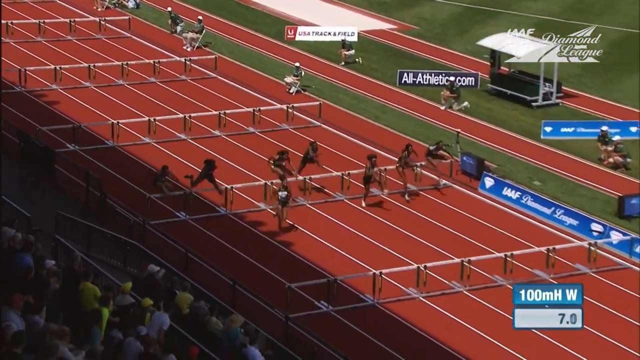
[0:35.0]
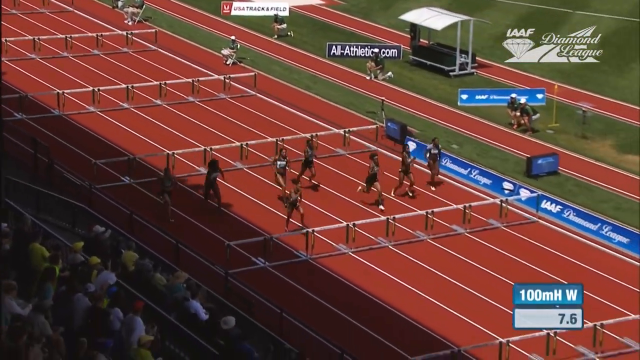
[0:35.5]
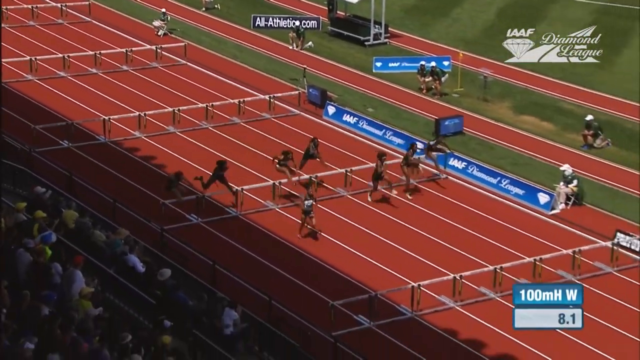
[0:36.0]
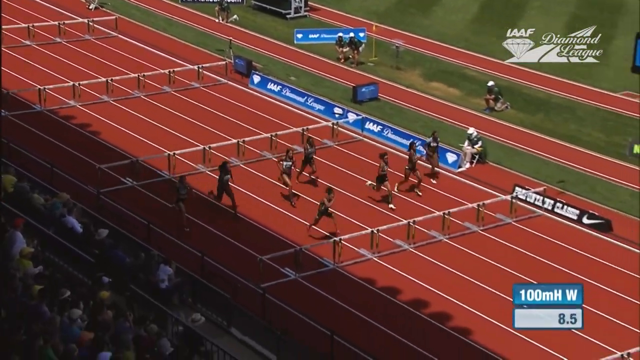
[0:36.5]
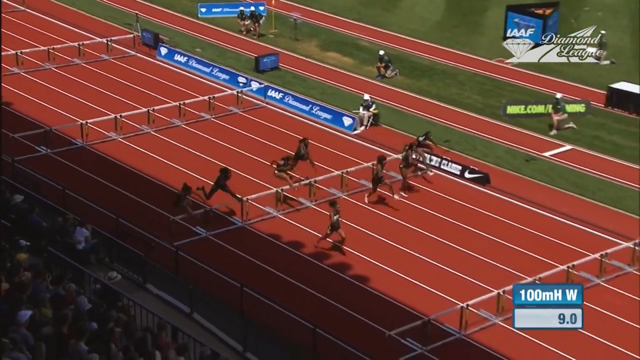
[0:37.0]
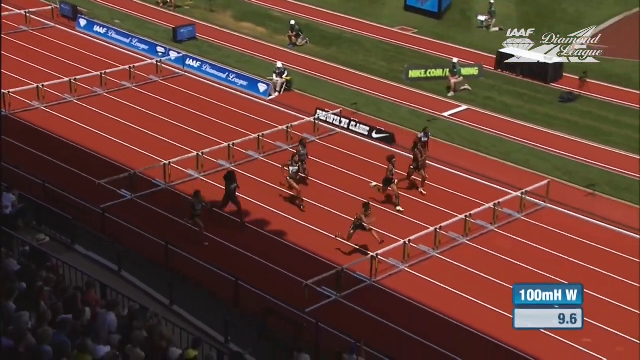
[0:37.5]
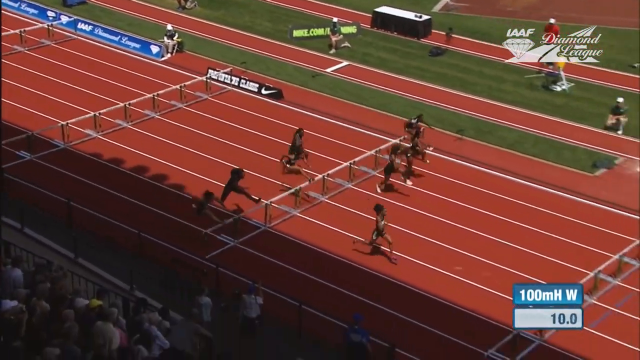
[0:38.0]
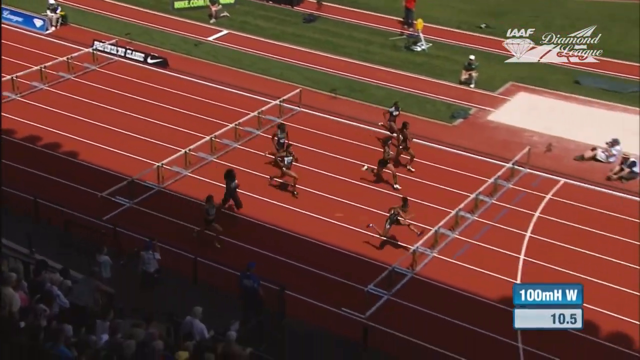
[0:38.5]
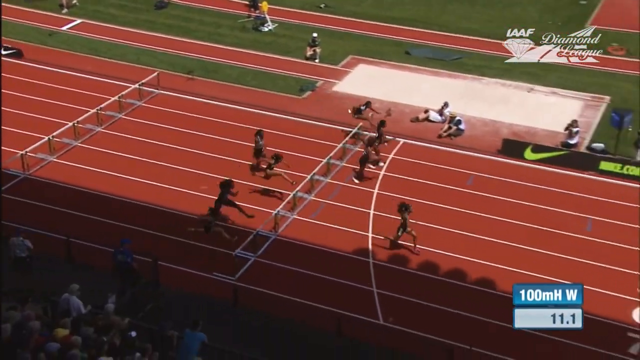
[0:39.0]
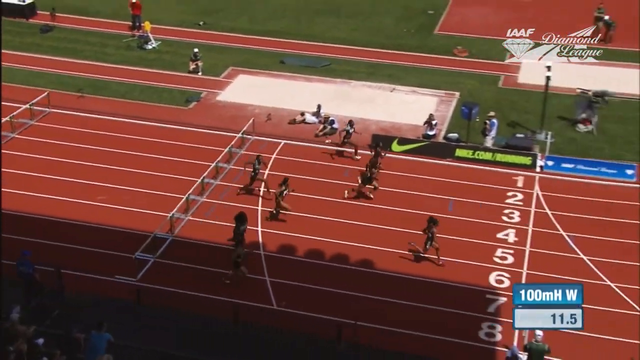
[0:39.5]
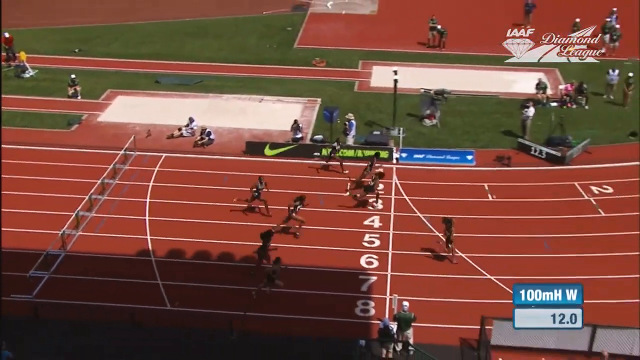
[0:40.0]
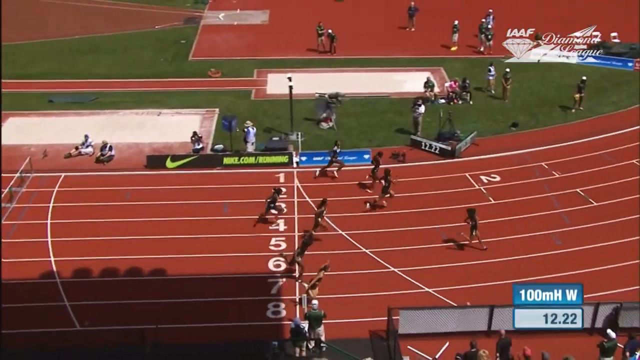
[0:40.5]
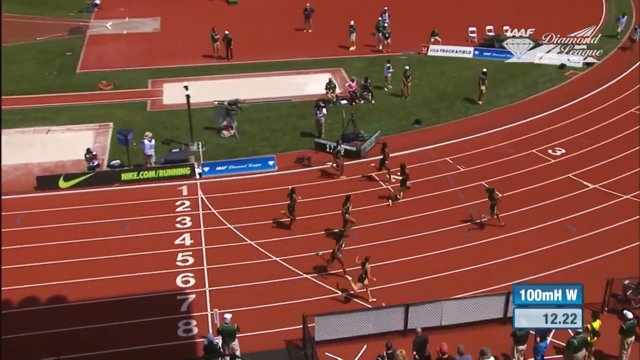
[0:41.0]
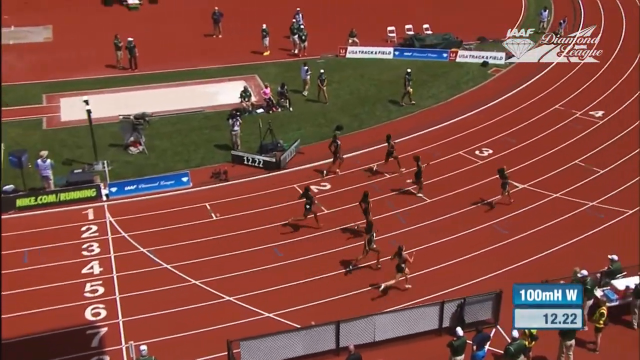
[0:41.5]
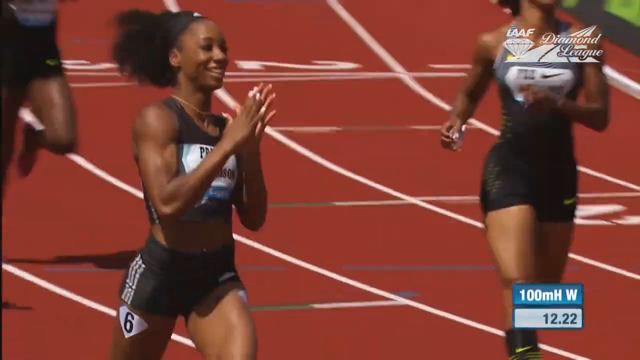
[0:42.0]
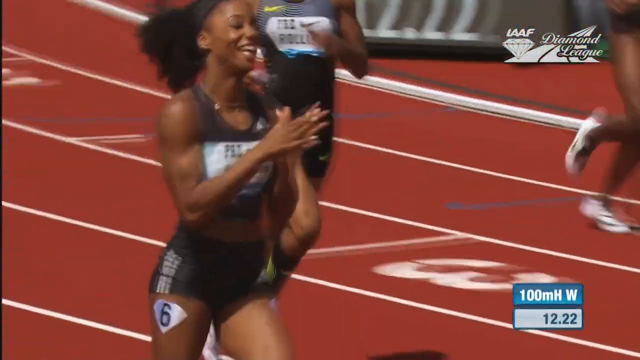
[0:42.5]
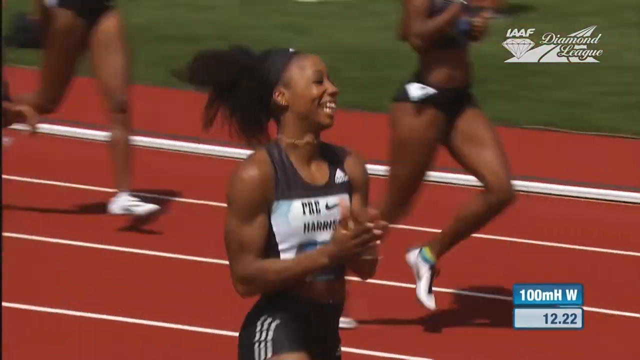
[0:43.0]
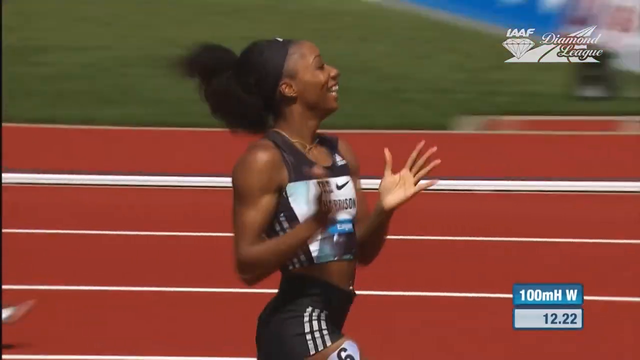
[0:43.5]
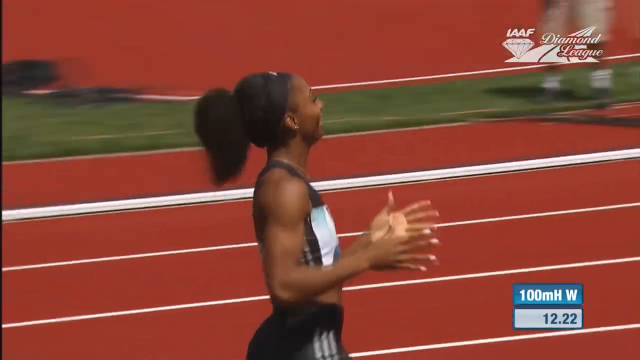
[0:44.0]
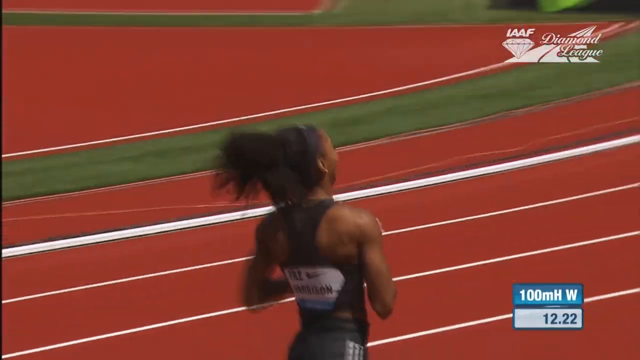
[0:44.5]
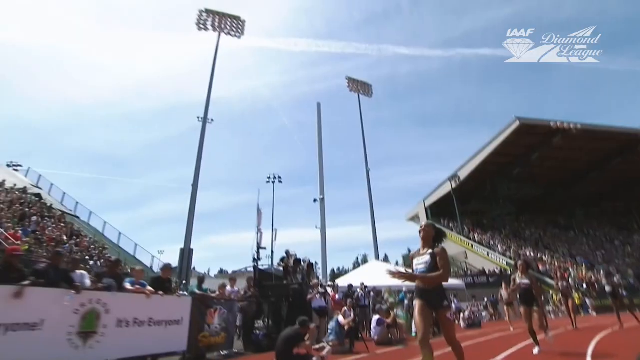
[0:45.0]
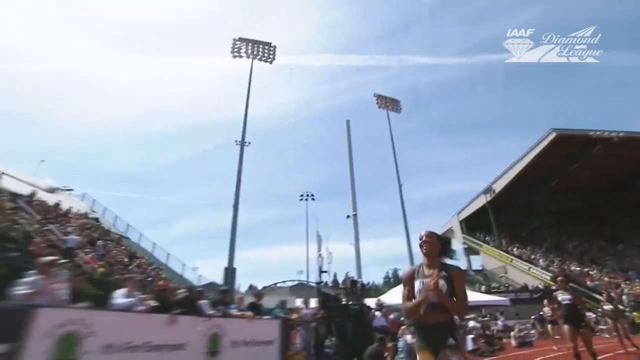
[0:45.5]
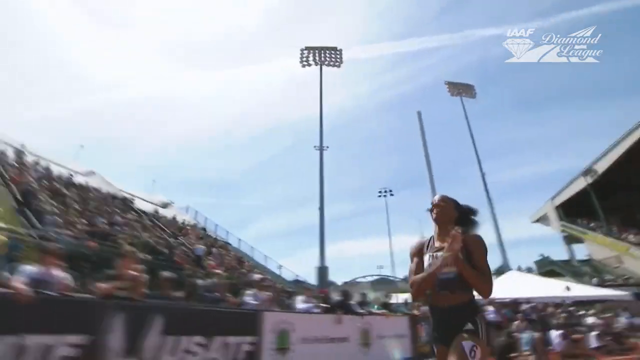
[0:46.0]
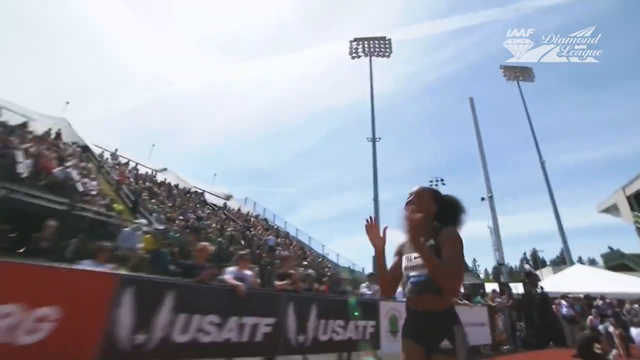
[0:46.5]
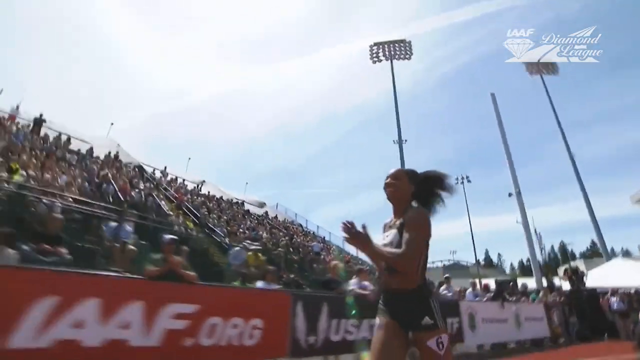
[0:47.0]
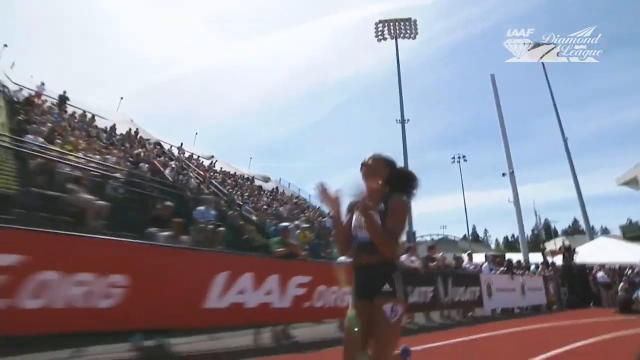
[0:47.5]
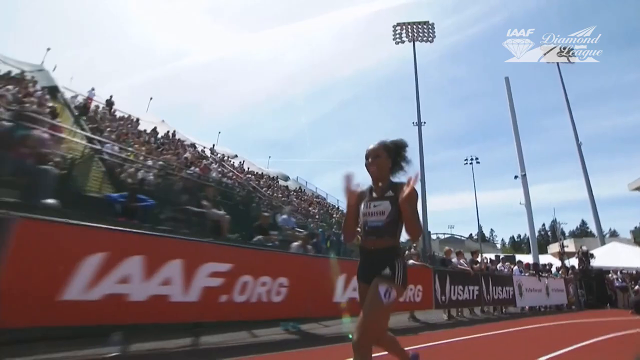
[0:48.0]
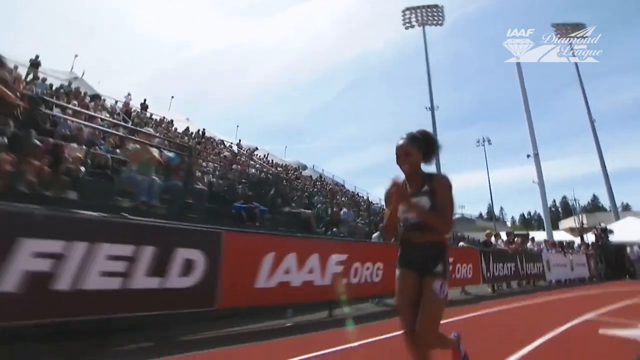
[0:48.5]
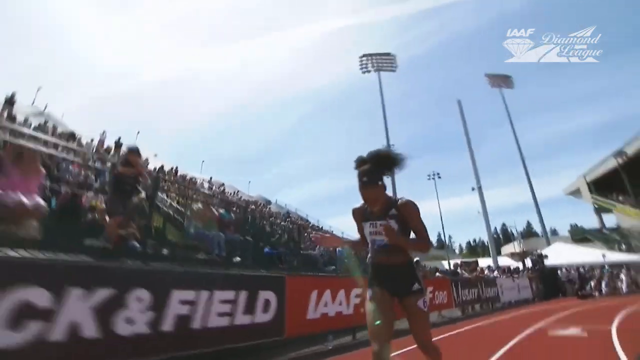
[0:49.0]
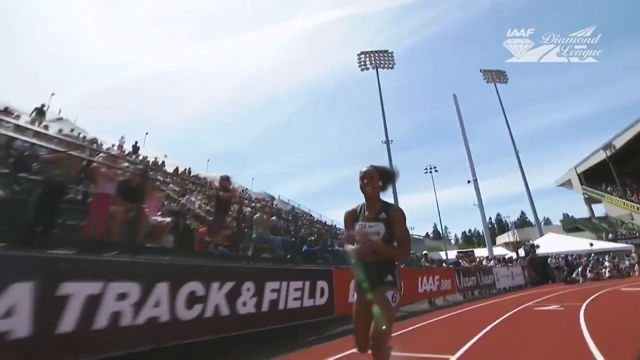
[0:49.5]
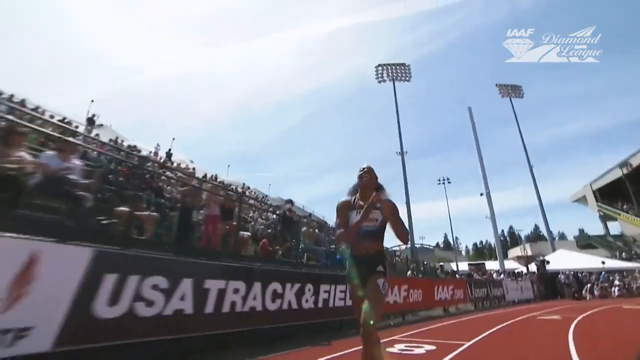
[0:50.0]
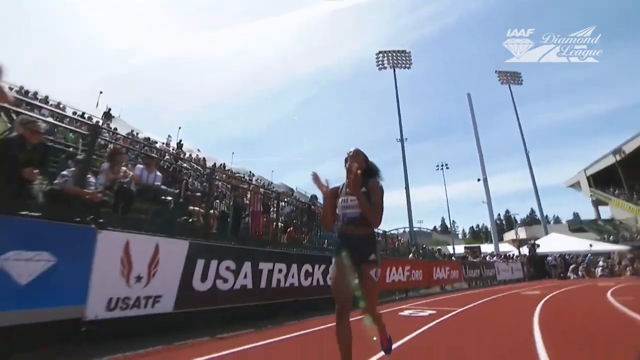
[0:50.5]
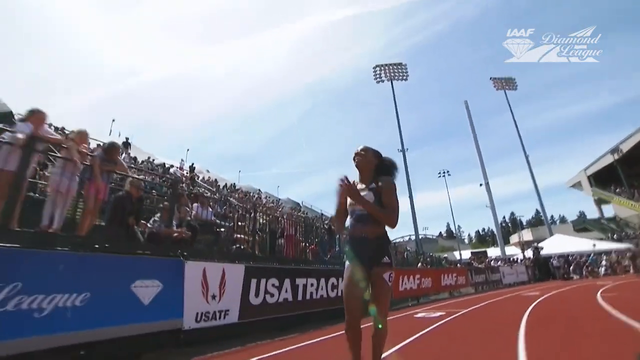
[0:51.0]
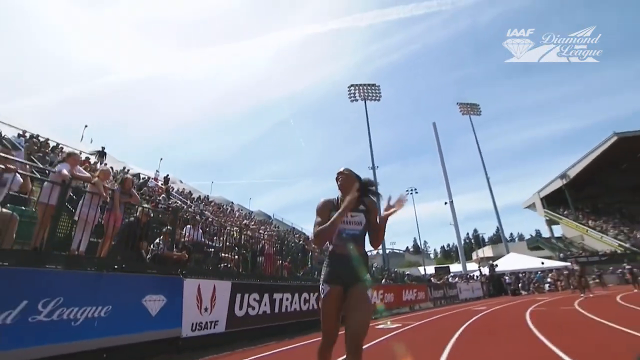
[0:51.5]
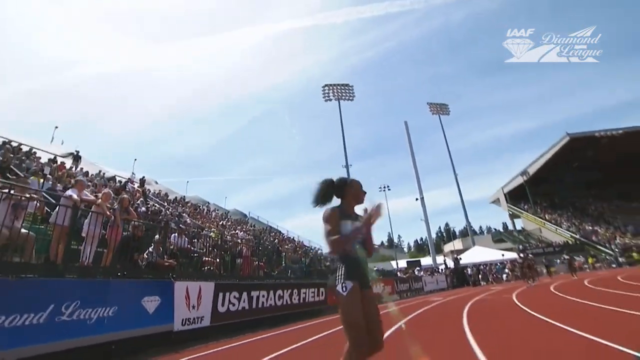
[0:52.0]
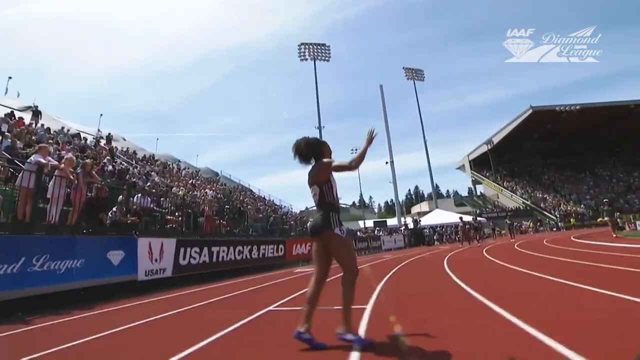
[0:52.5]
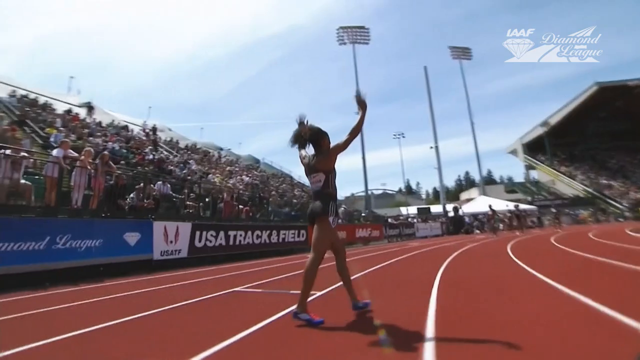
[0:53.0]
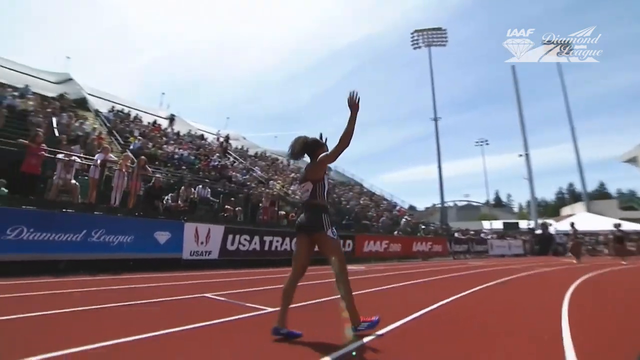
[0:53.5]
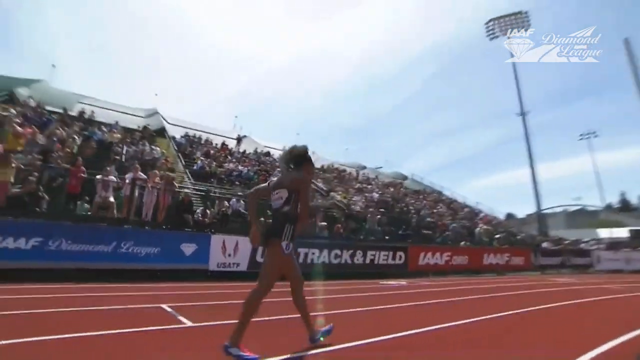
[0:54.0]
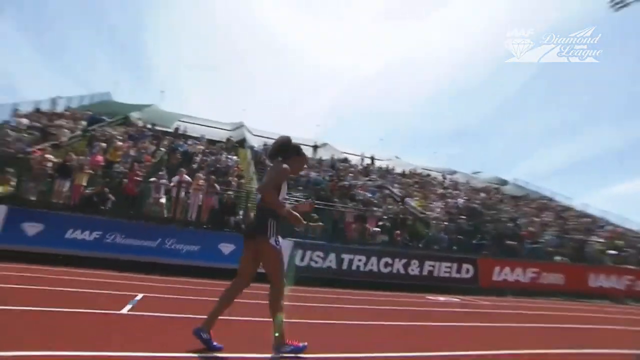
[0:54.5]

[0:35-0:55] The winner of the 100 meter hurdle event is shown, and the race is replayed in slow motion. After the event, the winner celebrates, throwing her hands up, while the graphic in the top right reads "IAAF Diamond League". The camera stays on the winner after the event ends as she claps her hands and celebrates her win.